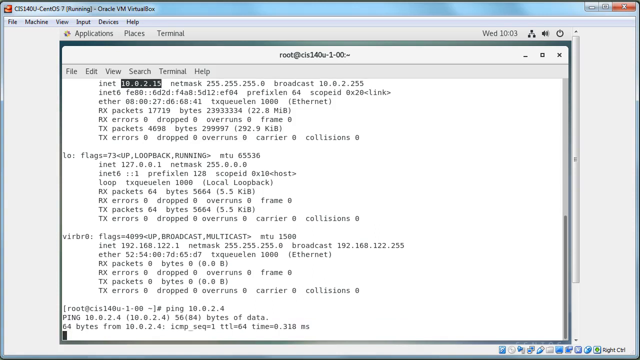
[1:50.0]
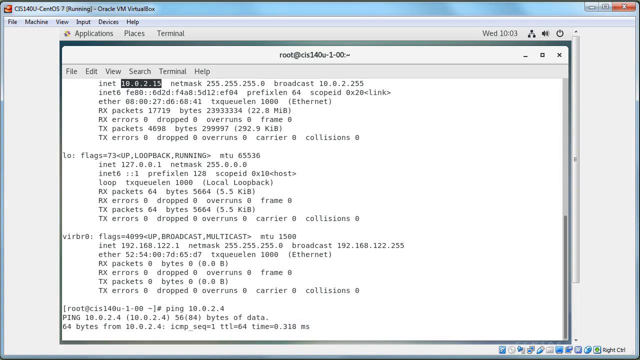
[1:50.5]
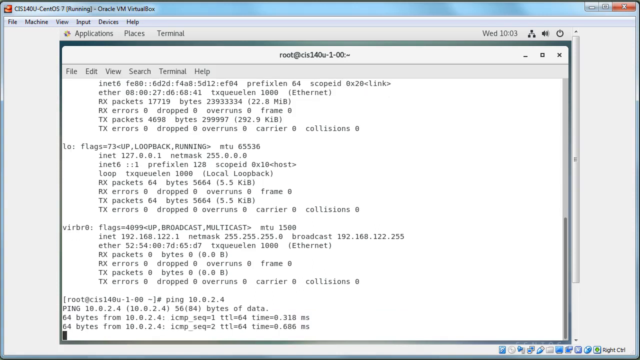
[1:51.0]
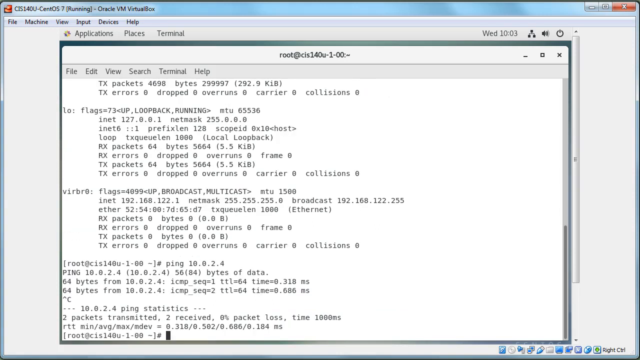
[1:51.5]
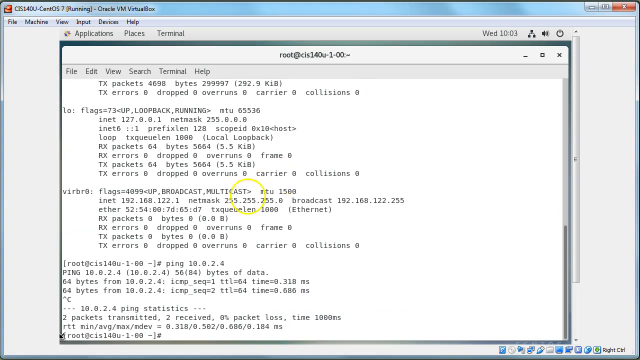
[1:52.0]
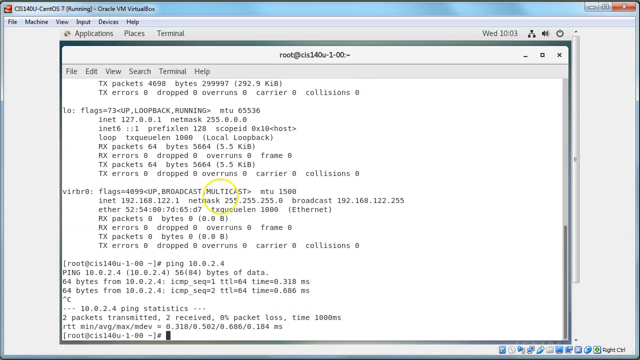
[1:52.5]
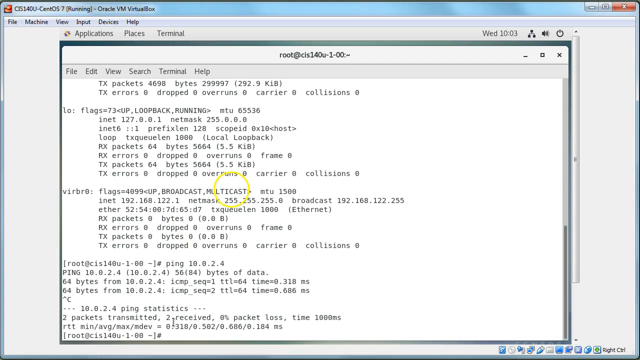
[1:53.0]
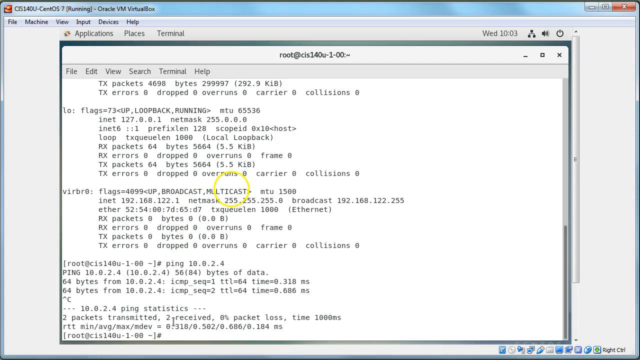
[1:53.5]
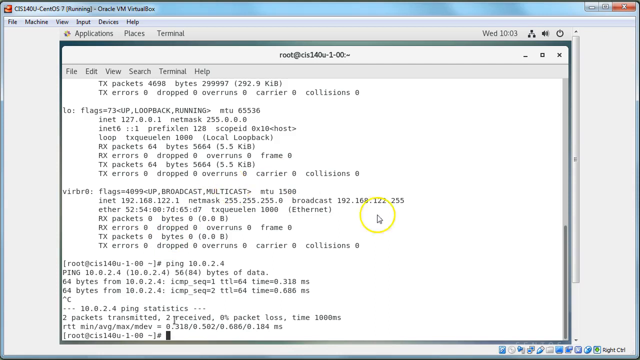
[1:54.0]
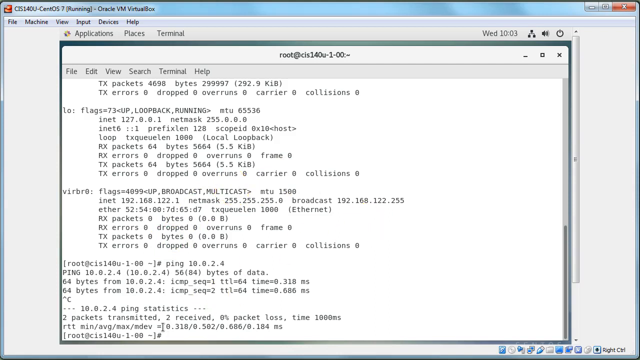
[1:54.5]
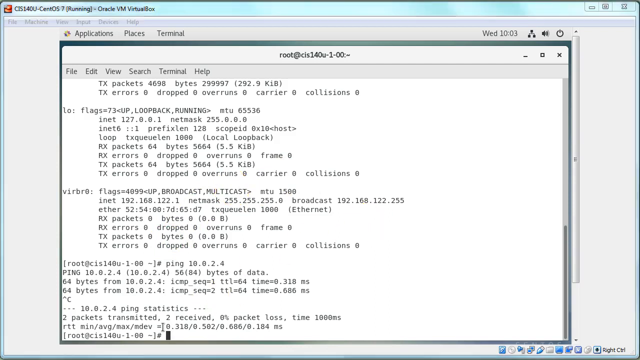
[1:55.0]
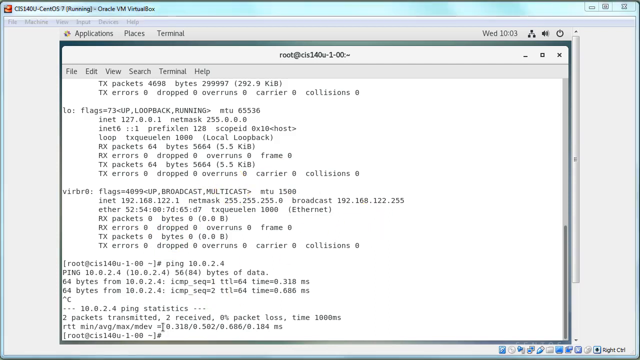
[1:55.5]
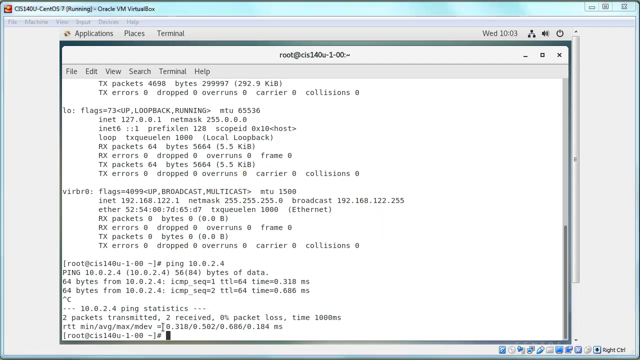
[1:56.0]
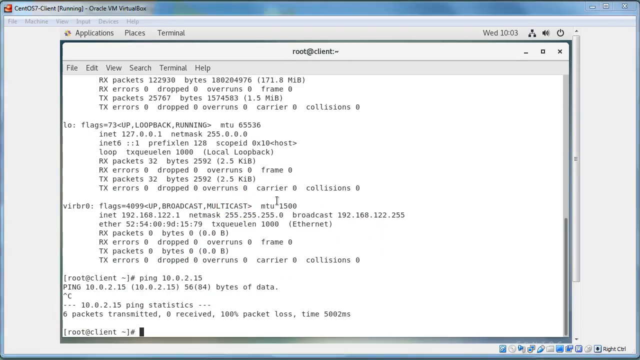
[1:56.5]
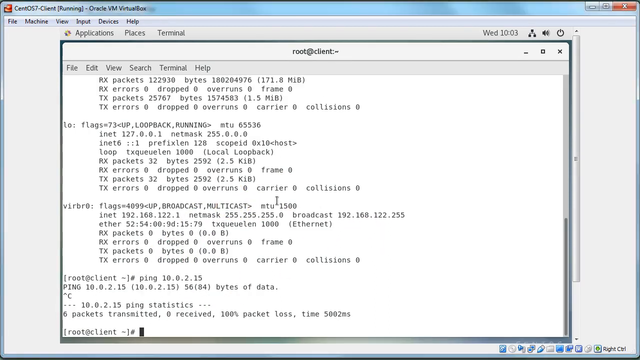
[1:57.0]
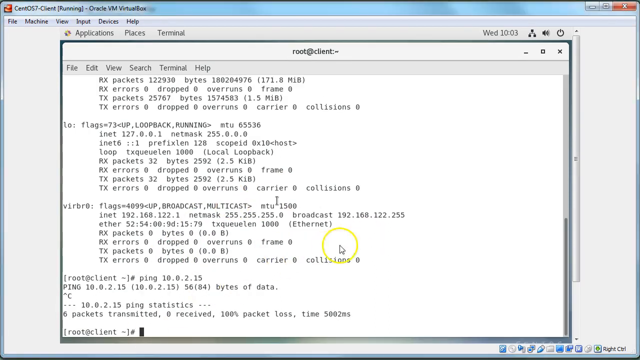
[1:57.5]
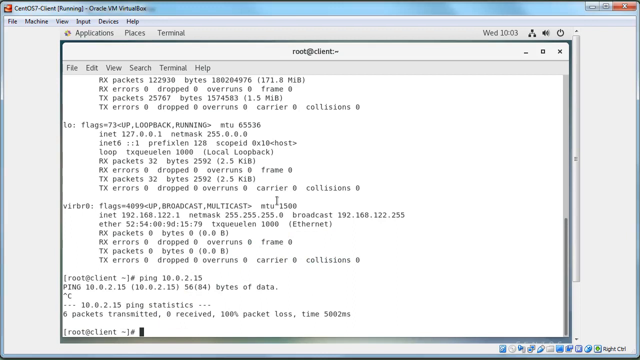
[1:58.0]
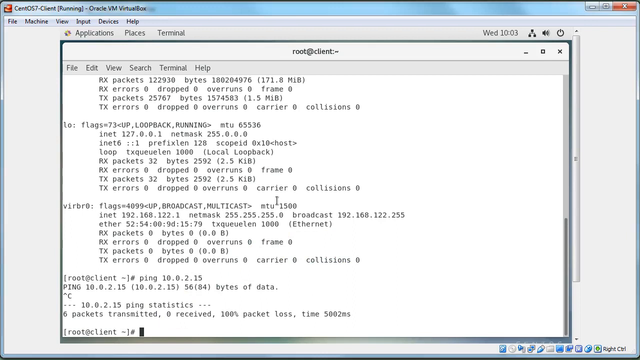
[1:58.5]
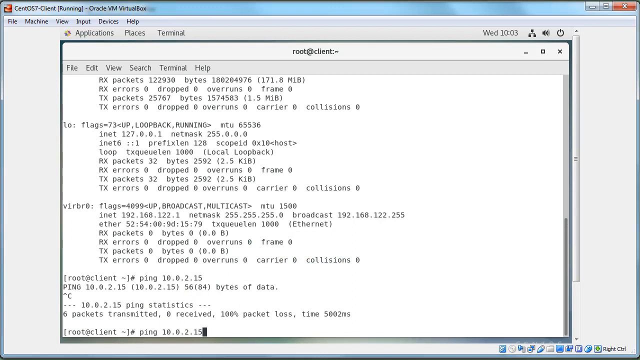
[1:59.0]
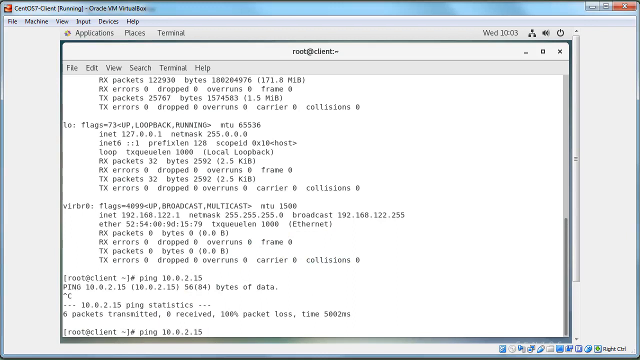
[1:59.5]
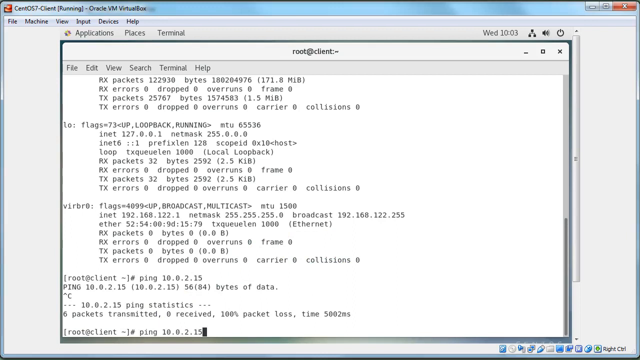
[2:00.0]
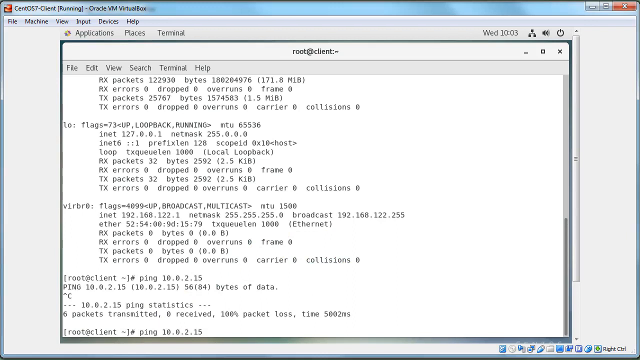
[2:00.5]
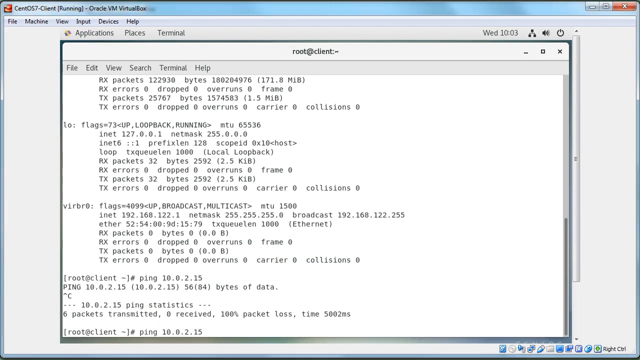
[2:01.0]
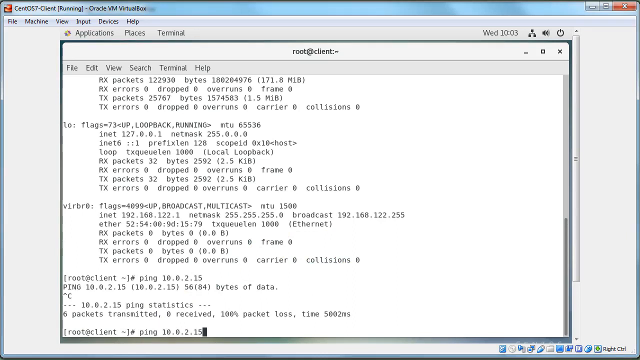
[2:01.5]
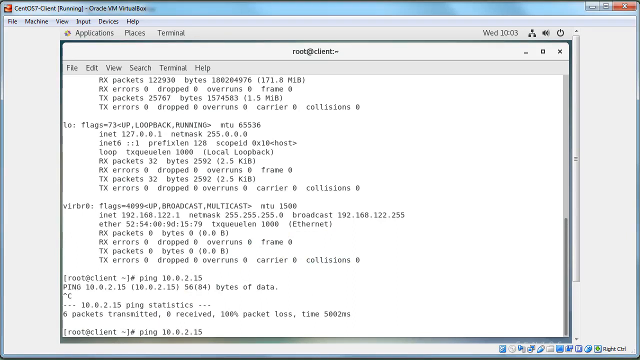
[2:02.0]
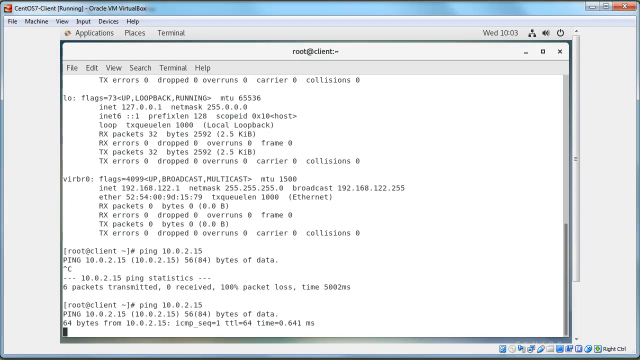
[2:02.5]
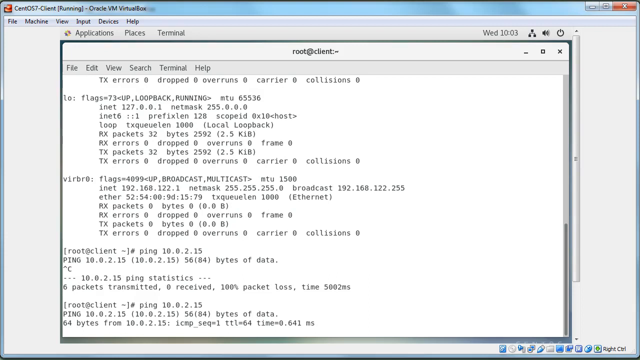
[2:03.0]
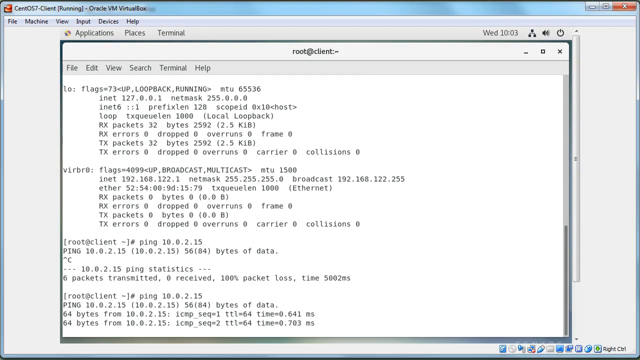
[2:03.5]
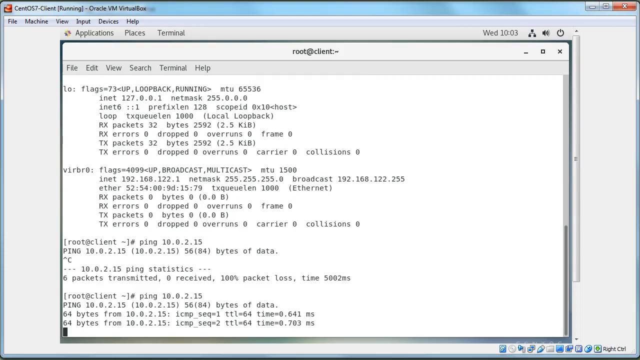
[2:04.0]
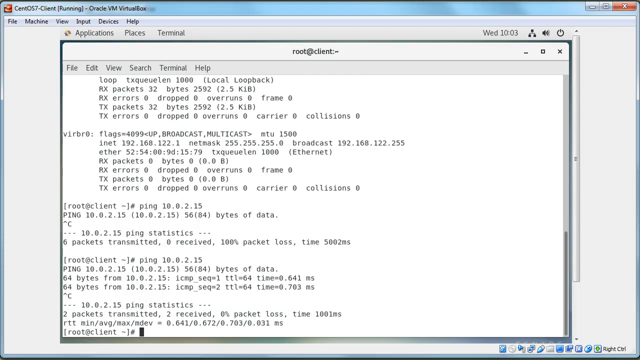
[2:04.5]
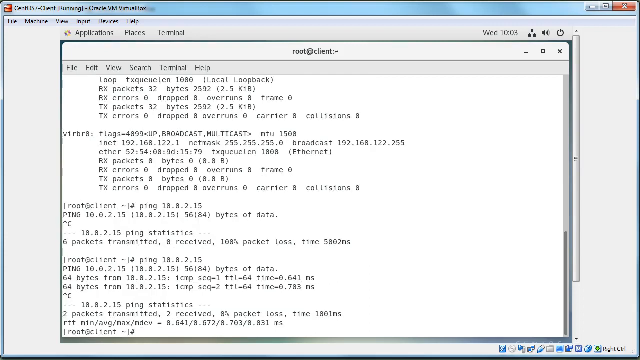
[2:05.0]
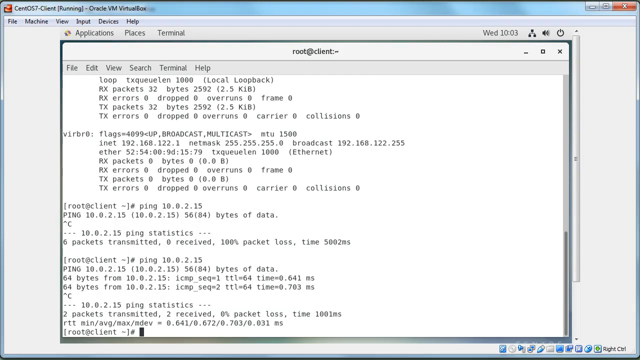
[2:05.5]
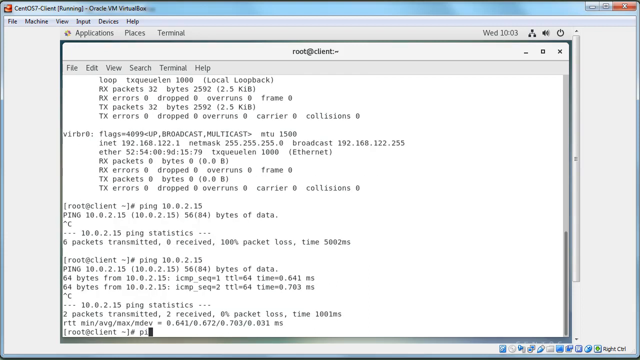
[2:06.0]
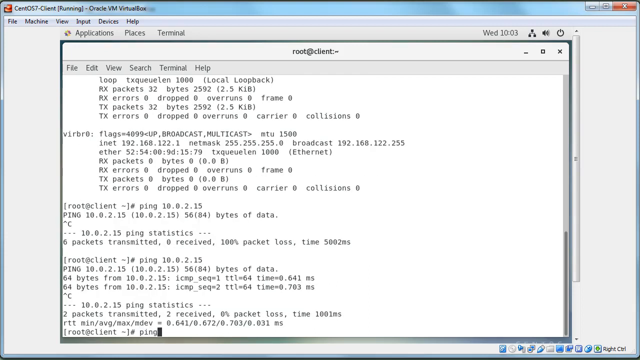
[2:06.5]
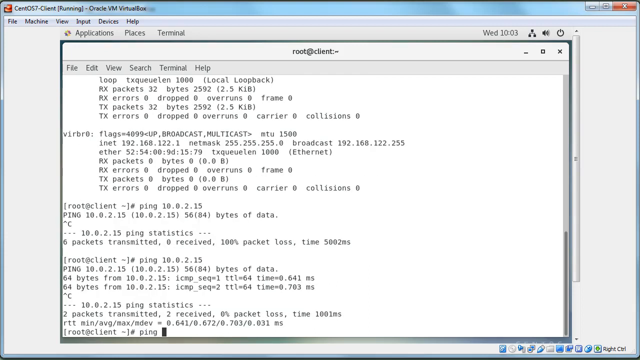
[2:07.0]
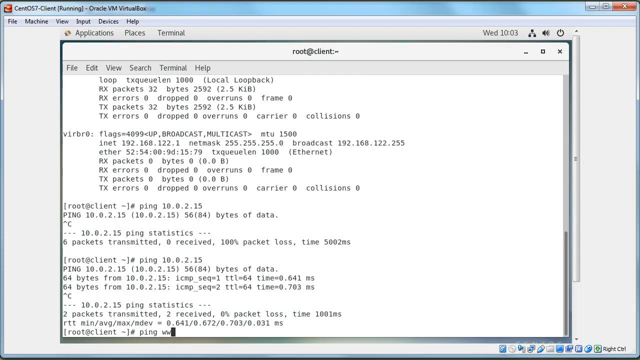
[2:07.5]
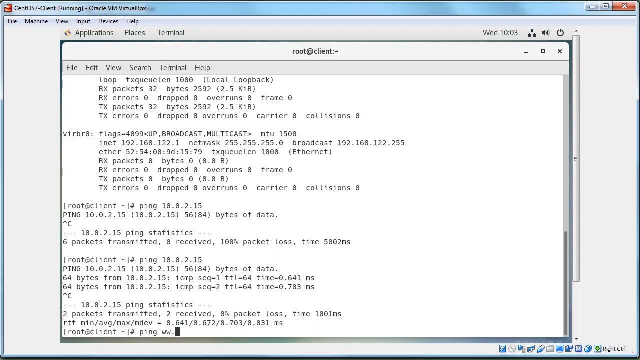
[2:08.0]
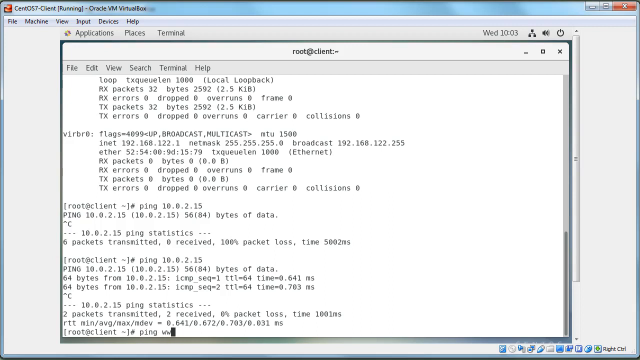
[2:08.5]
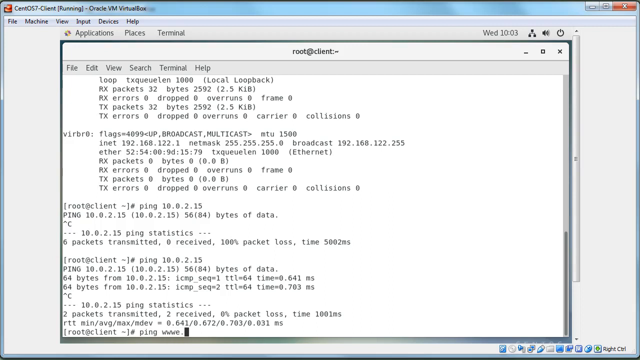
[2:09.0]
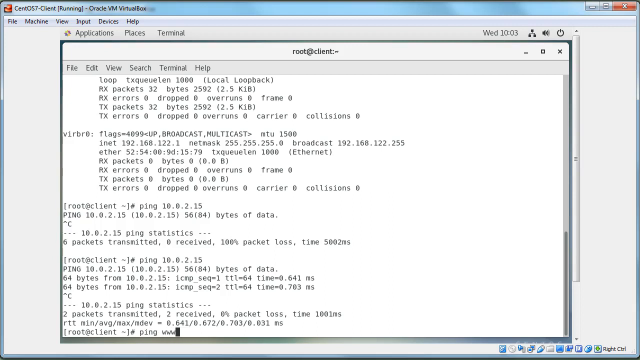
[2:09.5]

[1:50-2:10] The terminal of one of the virtual machines he is running in Oracle VM VirtualBox is shown, at root at vis. The terminal is already full of commands he has run, including ifconfig at the top with three paragraphs of information underneath, and the ping command showing the bytes of data. He has just run up arrow C, which shows the 10.0.2.4 ping statistics: two packets transmitted, two received, zero percent packet loss, time a thousand milliseconds. He then types ping 10.0.2.15, which shows the ping for that address with 56(84) bytes of data and two lines underneath showing 64 bytes from that IP and how many milliseconds. He types up arrow C again, showing the ping statistics. He then types ping www. and the shot cuts off.